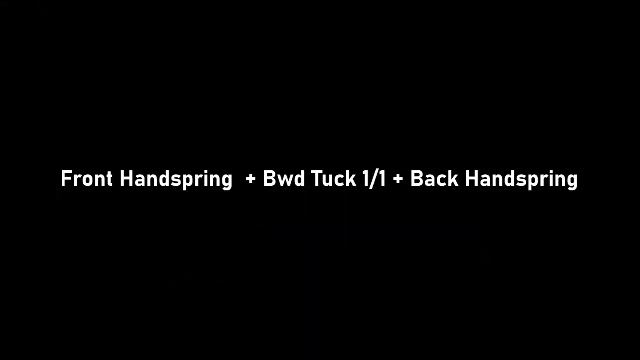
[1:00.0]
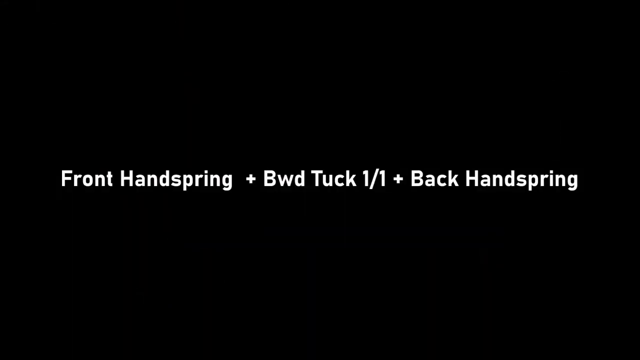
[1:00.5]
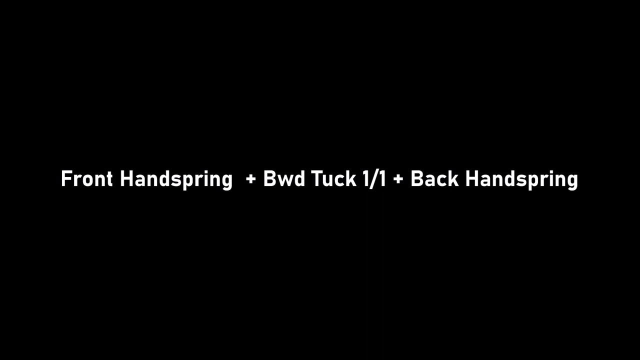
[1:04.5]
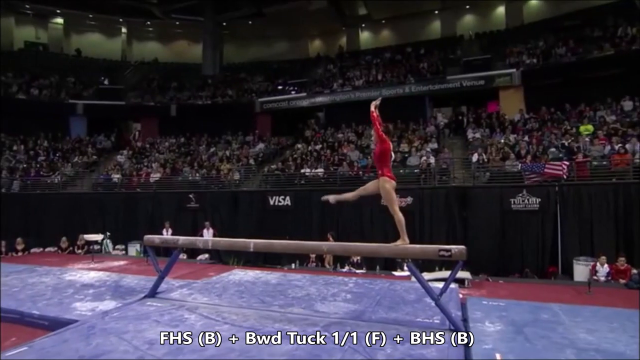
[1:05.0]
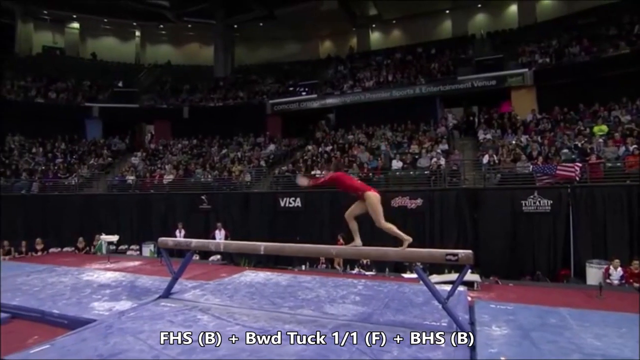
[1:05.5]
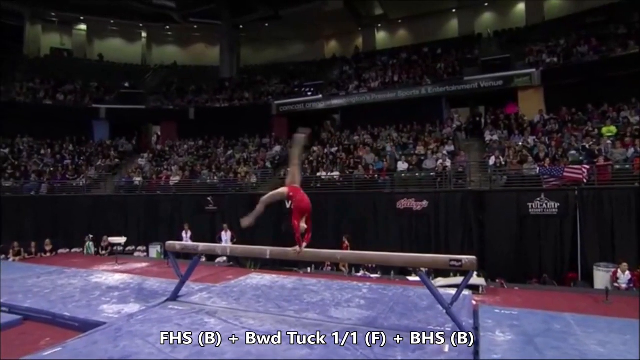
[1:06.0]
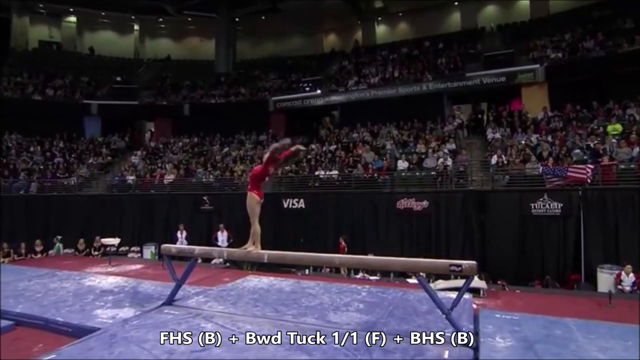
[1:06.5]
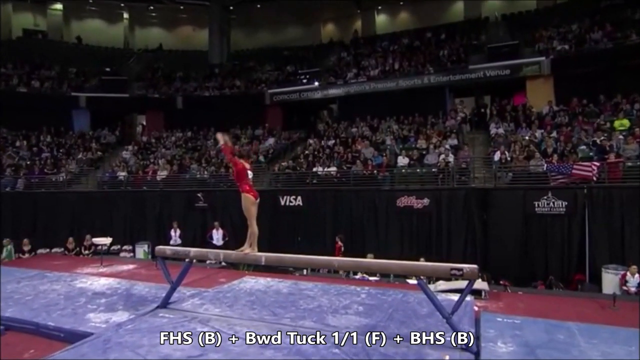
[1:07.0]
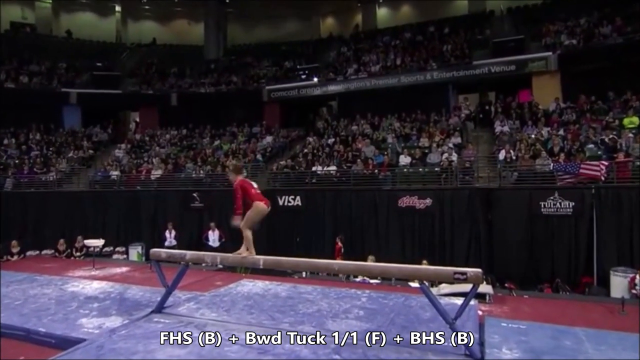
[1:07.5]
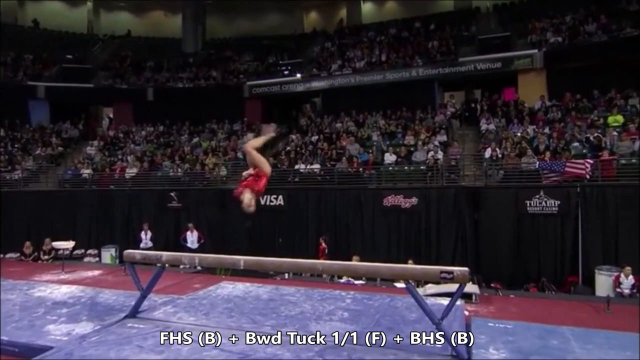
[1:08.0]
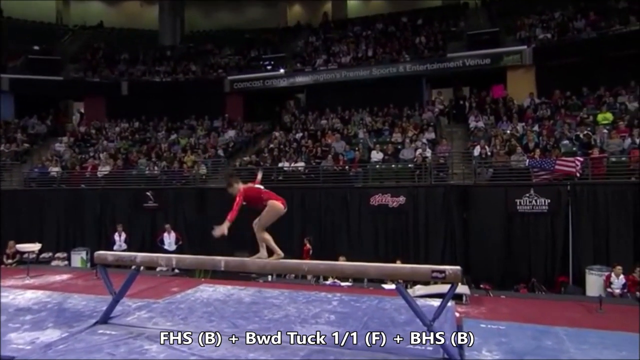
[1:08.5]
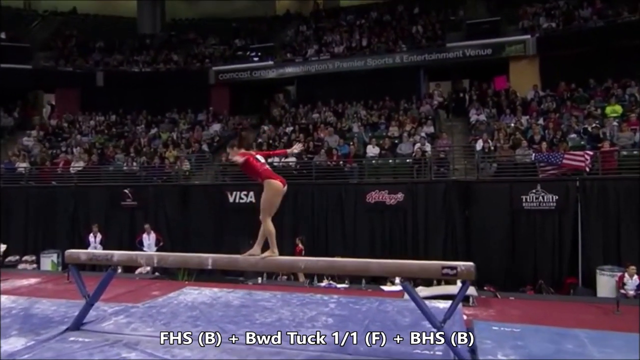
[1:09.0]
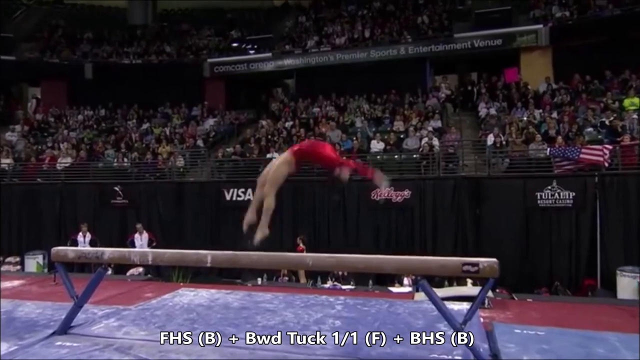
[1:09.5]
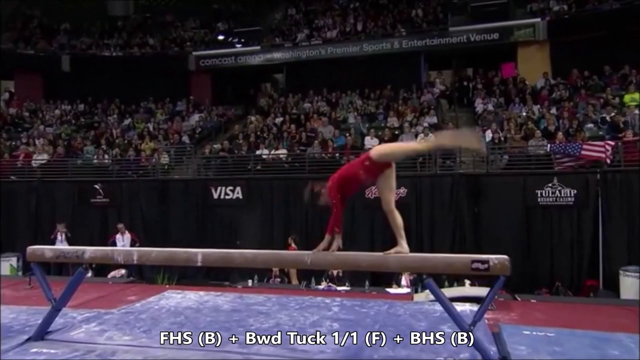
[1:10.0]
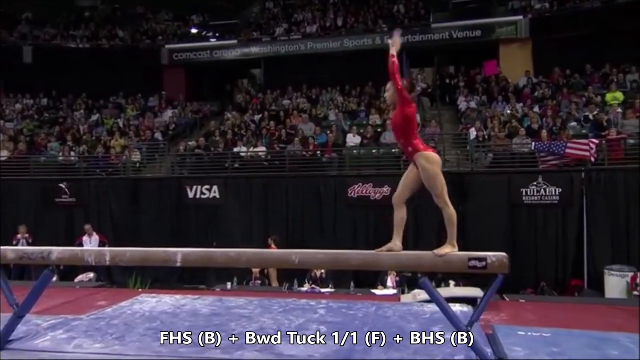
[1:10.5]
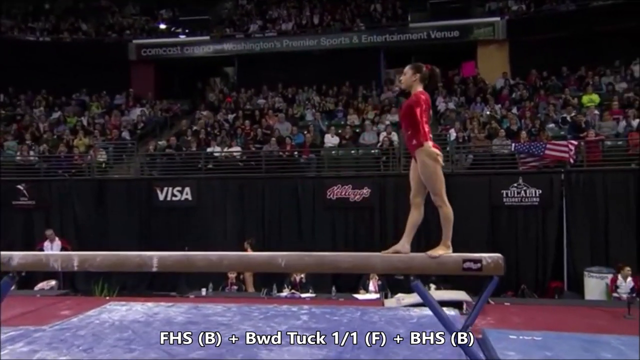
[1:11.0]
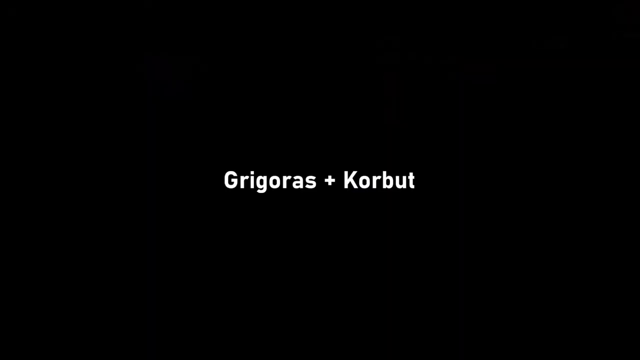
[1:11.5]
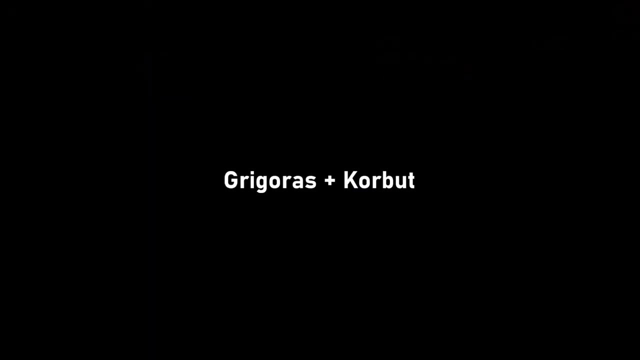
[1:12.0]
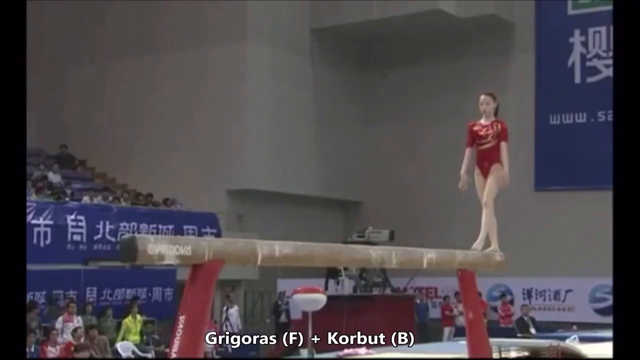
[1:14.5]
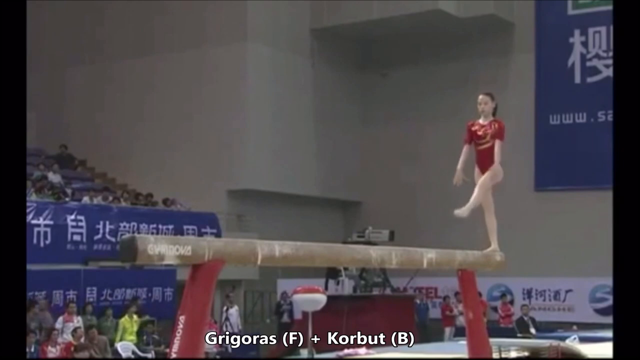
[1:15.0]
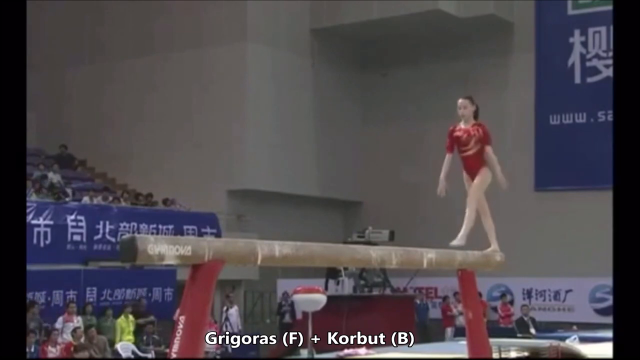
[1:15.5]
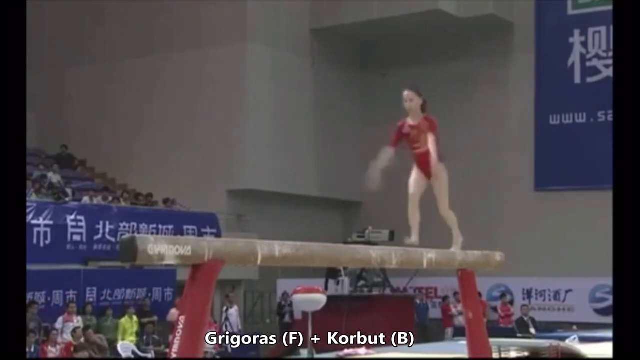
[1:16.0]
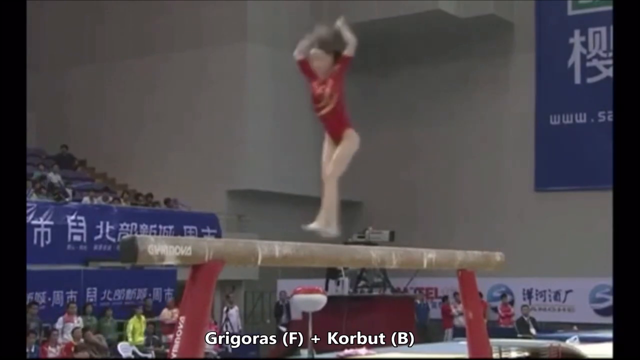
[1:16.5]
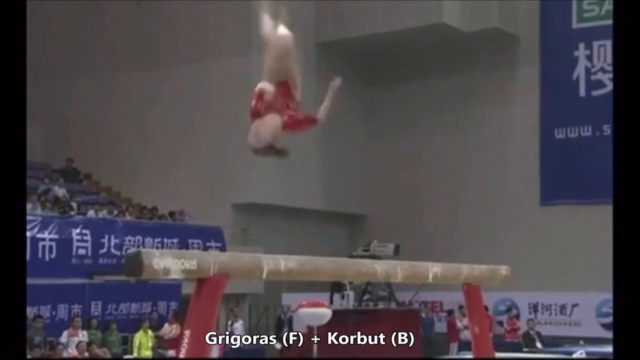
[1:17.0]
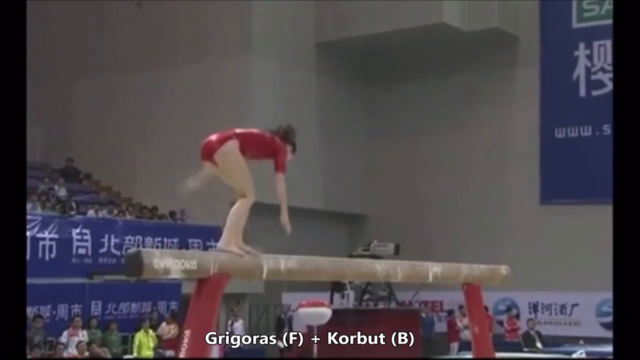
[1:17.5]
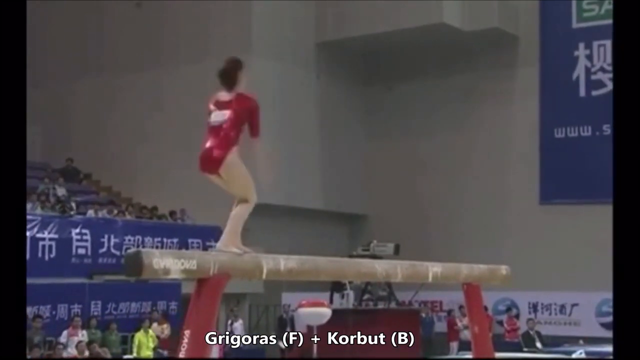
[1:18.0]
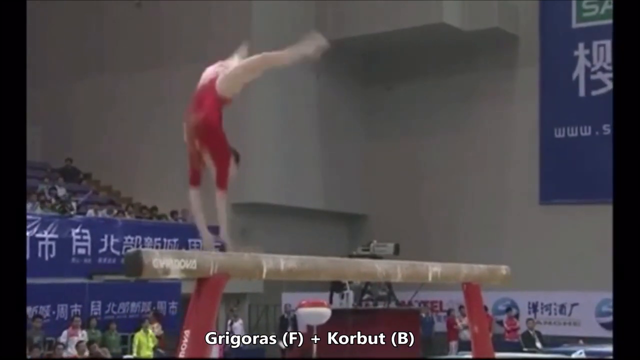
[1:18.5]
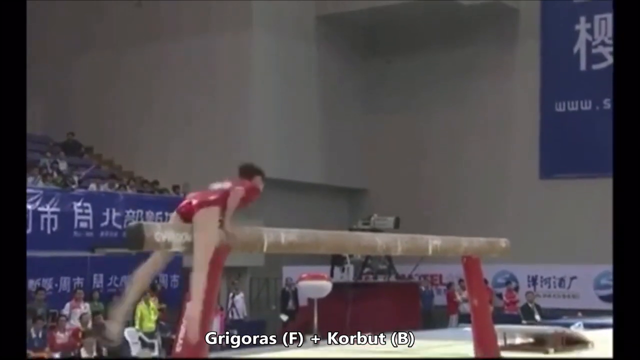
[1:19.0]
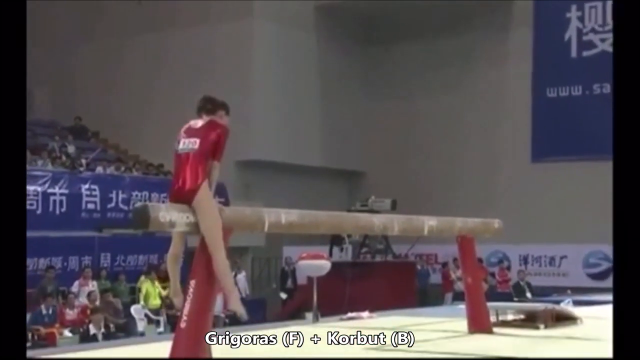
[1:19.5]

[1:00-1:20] The background is flat, and white text reads "front handspring +", then a capital B, then "WD tuck 1/1 +" and "back handspring". The words stay up for a few seconds. A gymnast is on the beam; she runs and does what looks like a front flip, lands on the beam, then does a spinning back flip, then a different type of move, and she does not move or wobble. Then text reads "Grioras + Korbut".